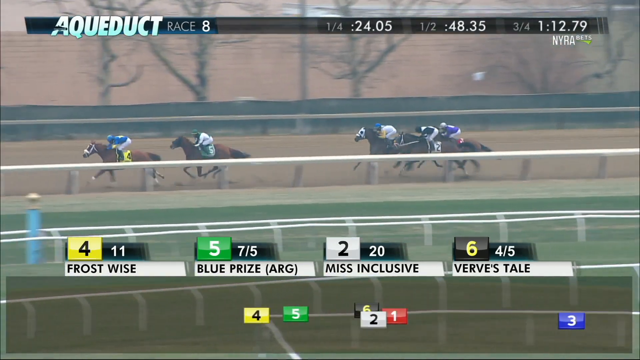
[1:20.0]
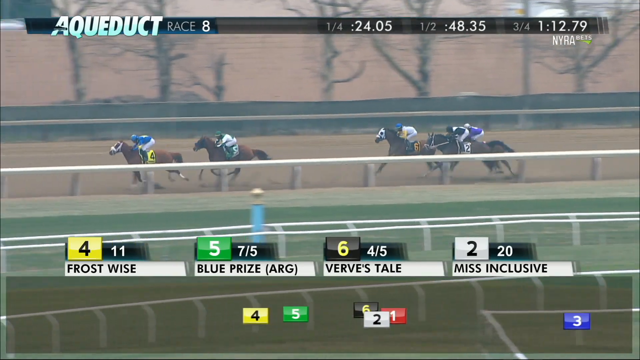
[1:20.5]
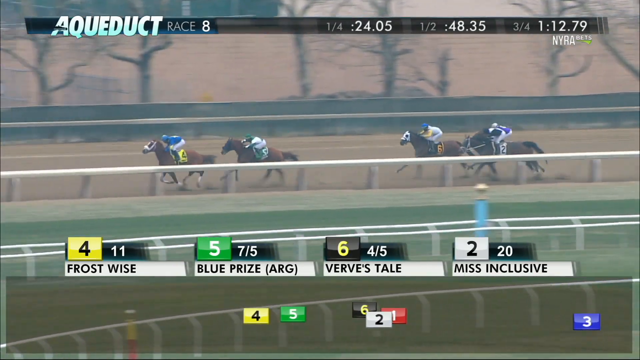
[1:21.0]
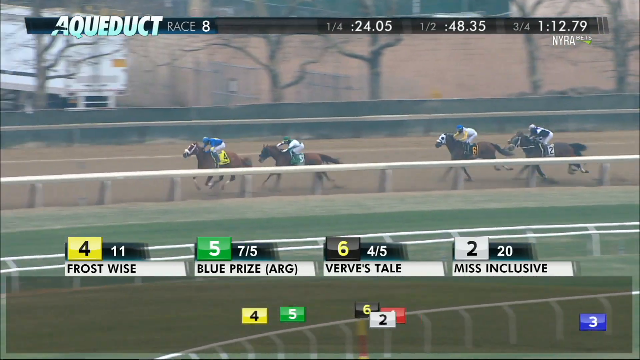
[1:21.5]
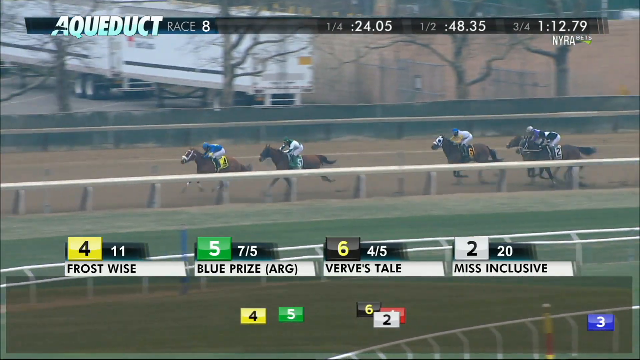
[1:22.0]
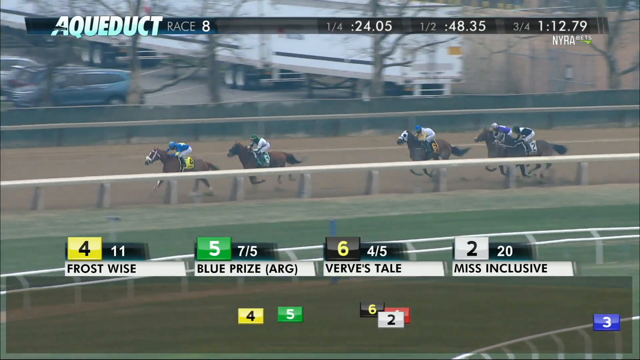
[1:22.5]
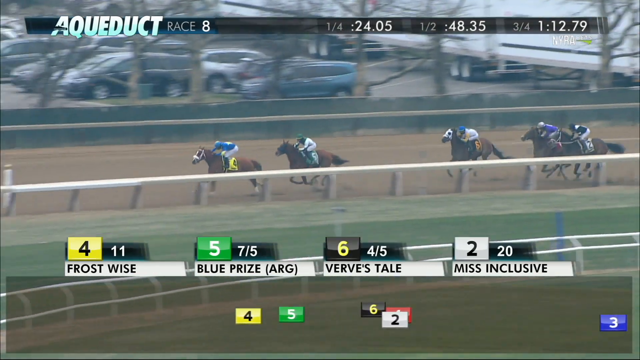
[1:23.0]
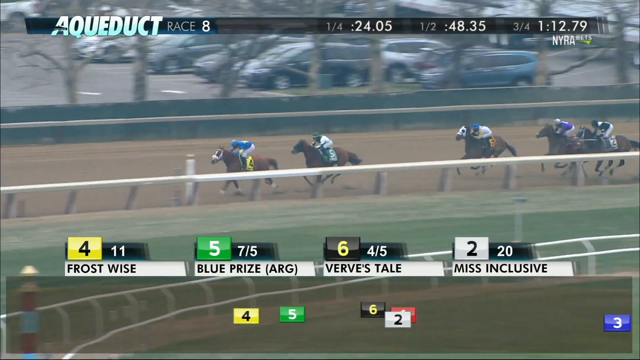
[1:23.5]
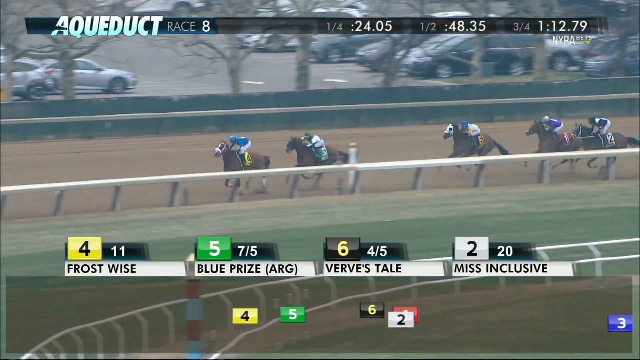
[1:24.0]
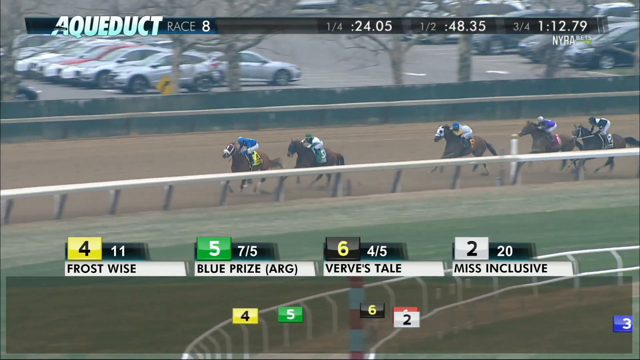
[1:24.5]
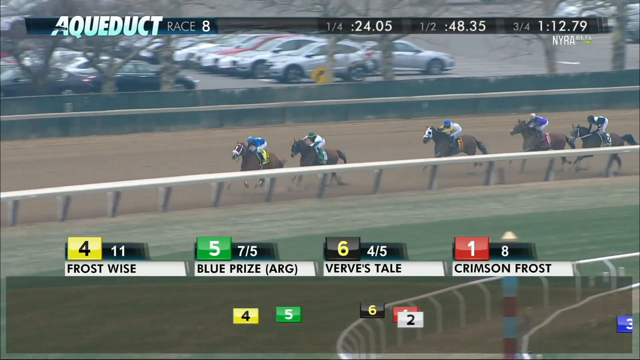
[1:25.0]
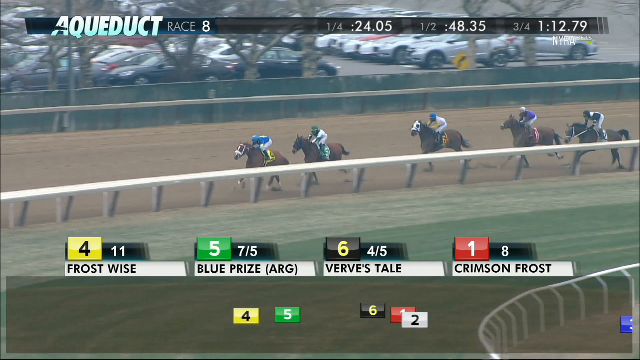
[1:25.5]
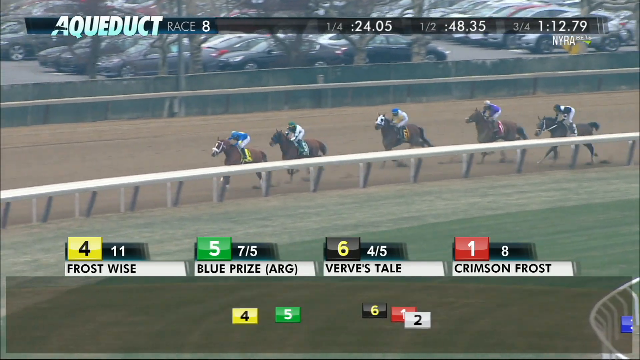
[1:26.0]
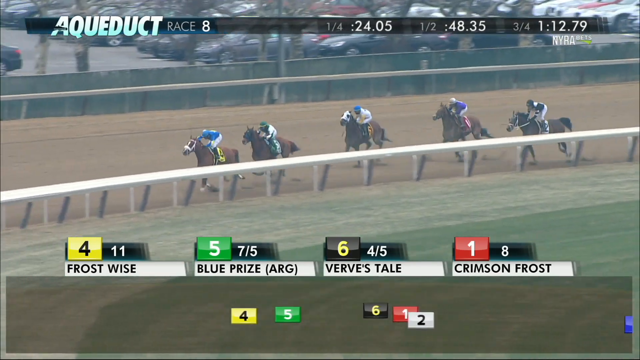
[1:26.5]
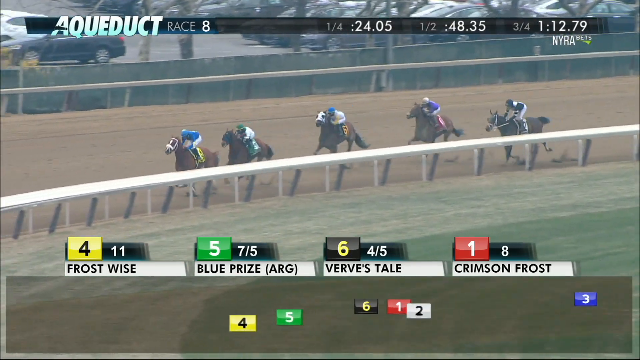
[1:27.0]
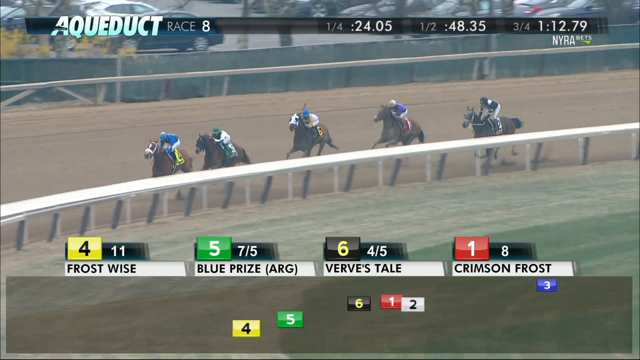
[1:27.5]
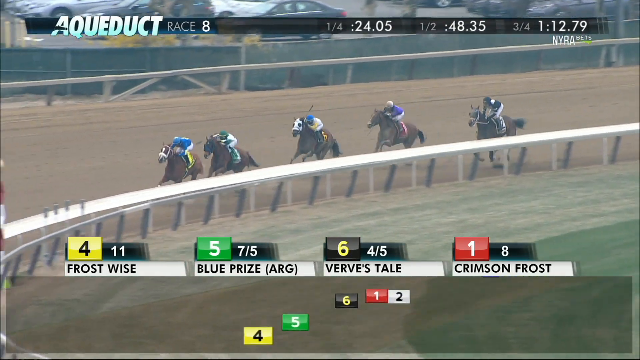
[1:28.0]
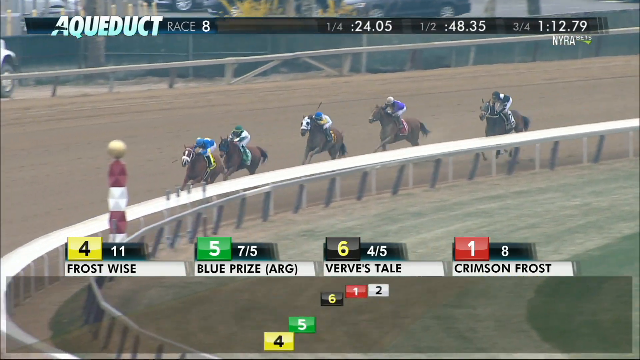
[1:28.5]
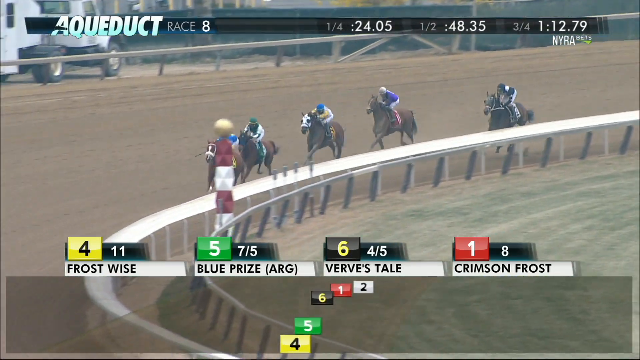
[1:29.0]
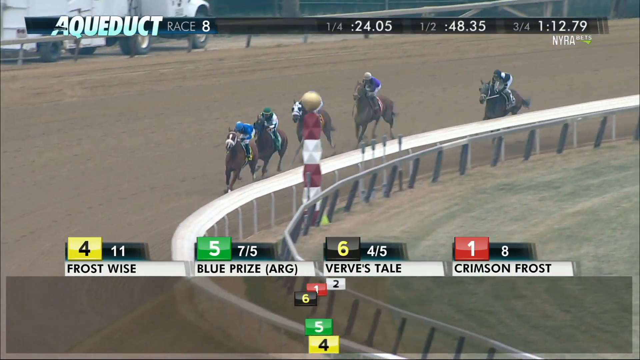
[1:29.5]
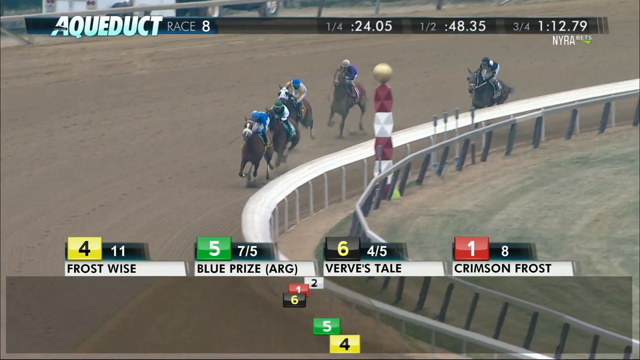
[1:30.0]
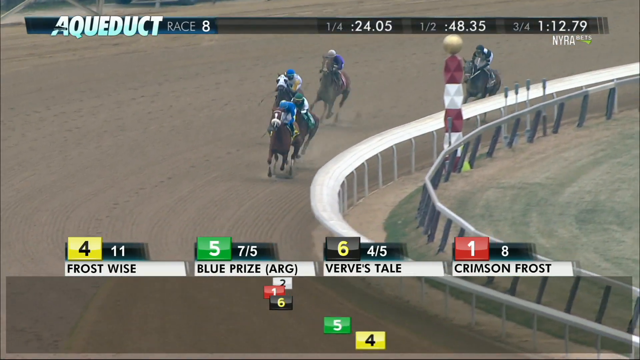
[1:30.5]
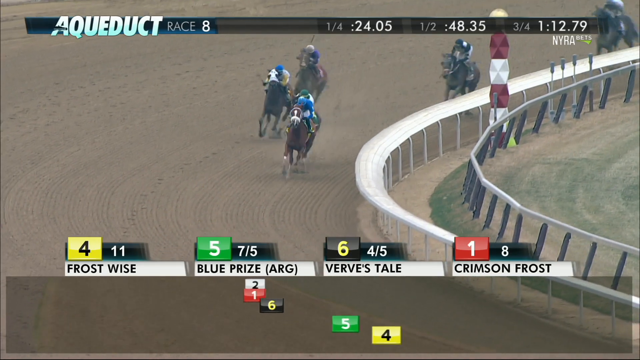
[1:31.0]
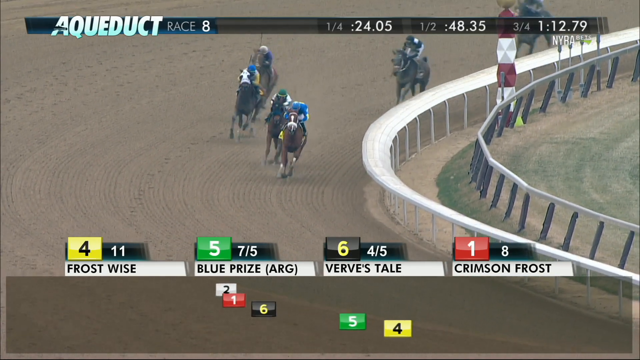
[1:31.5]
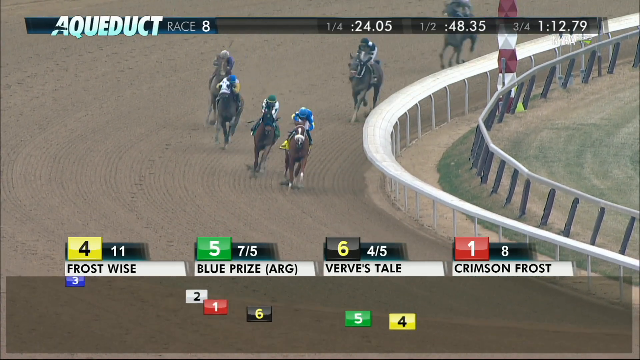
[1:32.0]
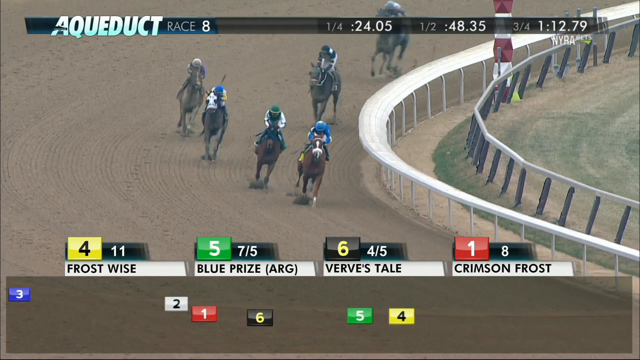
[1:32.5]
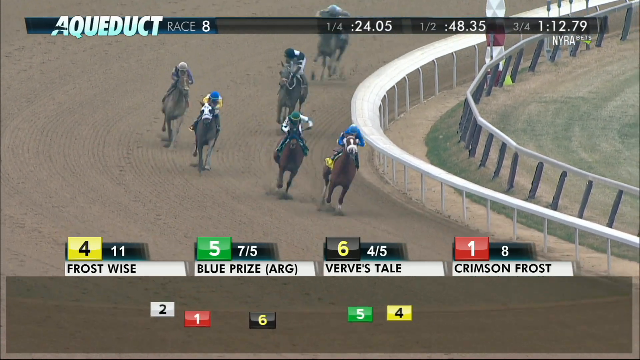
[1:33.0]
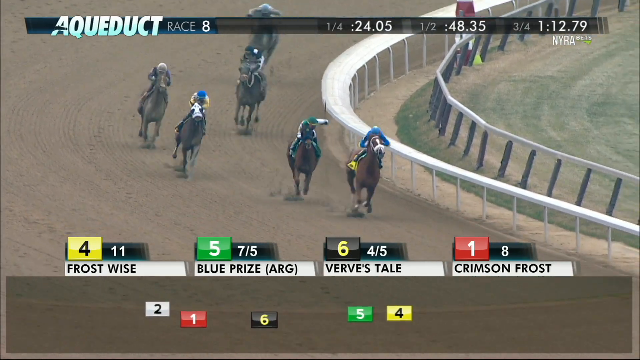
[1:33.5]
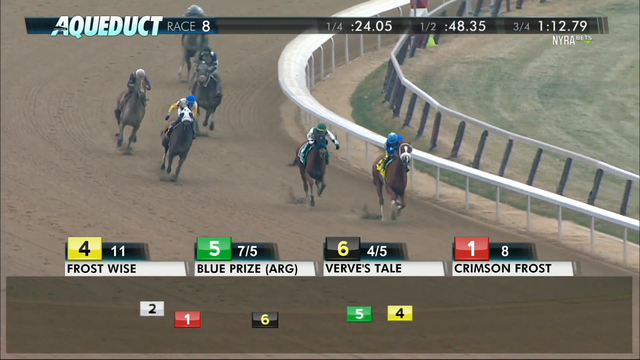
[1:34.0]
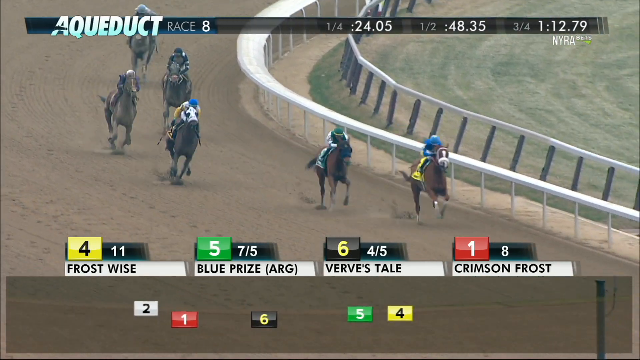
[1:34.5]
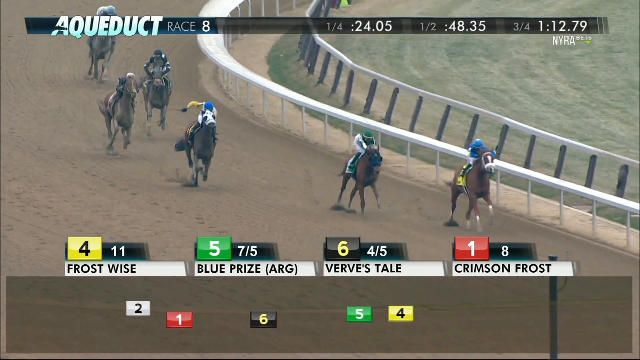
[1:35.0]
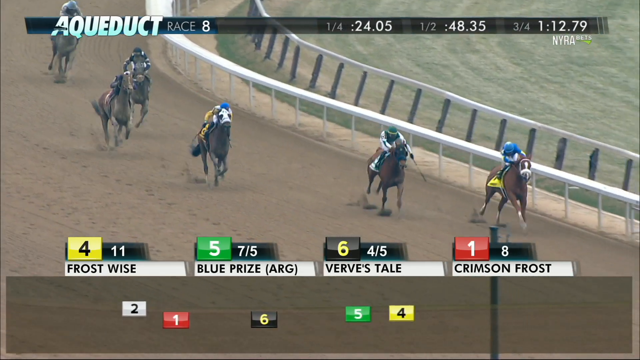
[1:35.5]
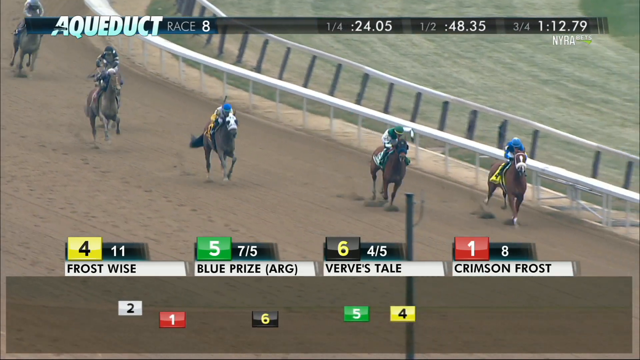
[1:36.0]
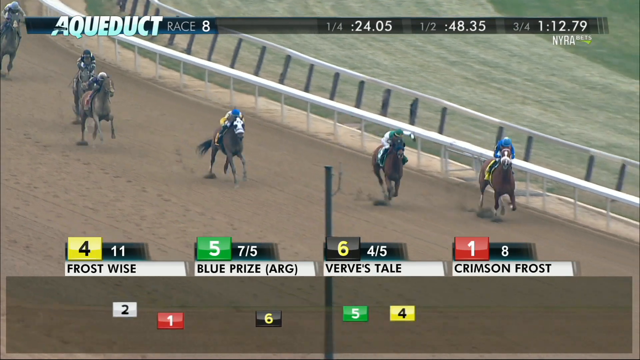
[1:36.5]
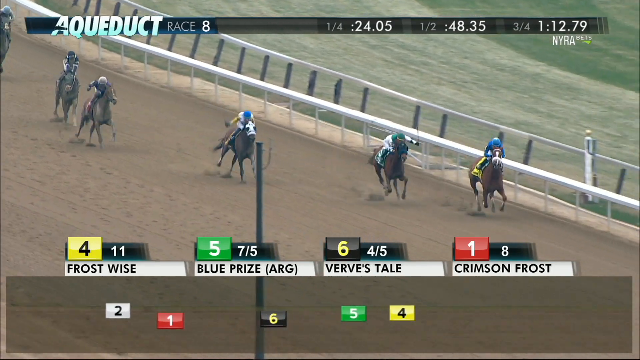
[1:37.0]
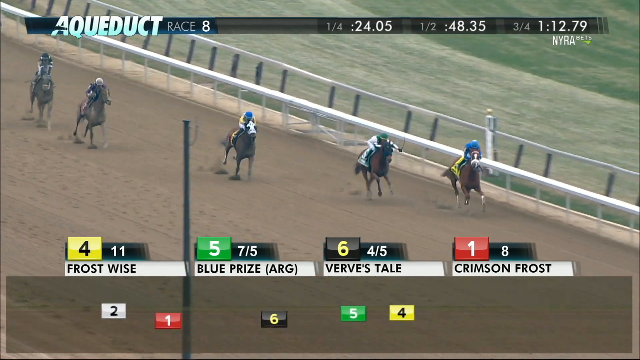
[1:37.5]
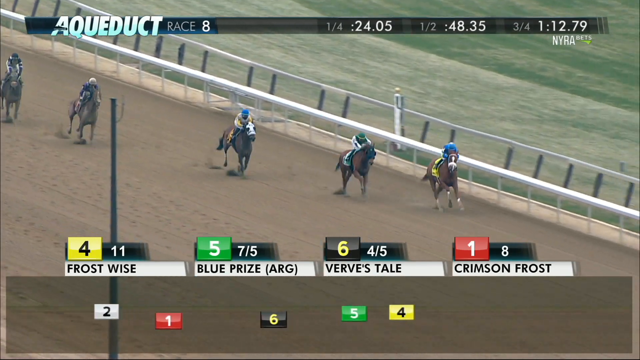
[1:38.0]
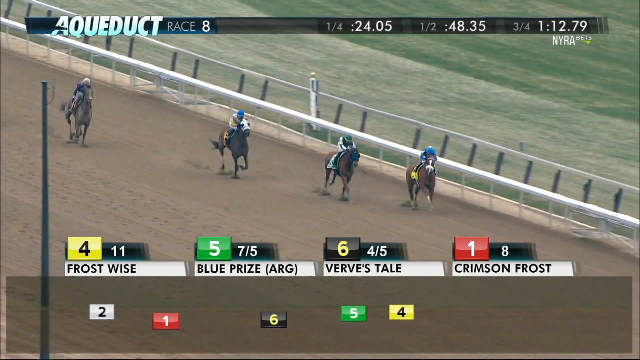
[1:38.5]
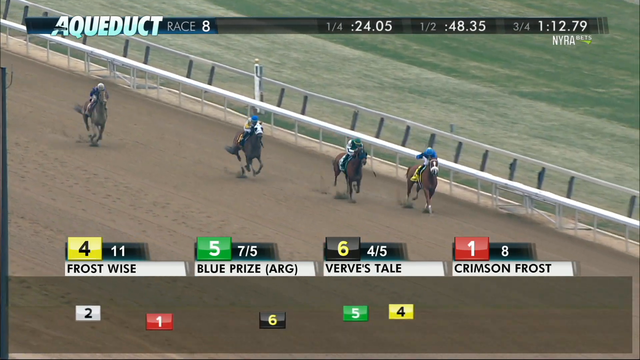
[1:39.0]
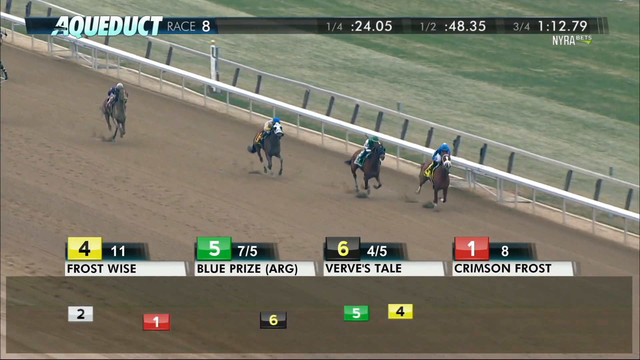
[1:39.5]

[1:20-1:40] The order of the horses stays the same, and the three-quarter mile split for the leader is shown as 1:12.79. One horse has fallen off, and there is a gap behind the first two horses. Versus Tail, in third, is moving pretty quick. The horses are kind of in a straight line, possibly drafting behind one another, and as they come around the curve some horses move out wide to find a lane to pass. They come down the home stretch, and the jockeys hit their horses with tiny whips to make them run faster. Frost Wise is still first, Blue Prize second, Versus Tail third, and Crimson Frost now fourth, all still moving pretty fast.